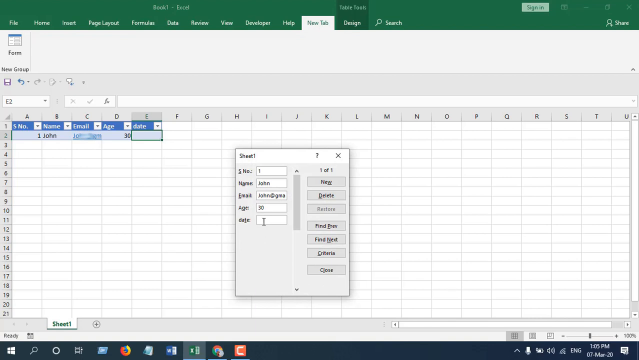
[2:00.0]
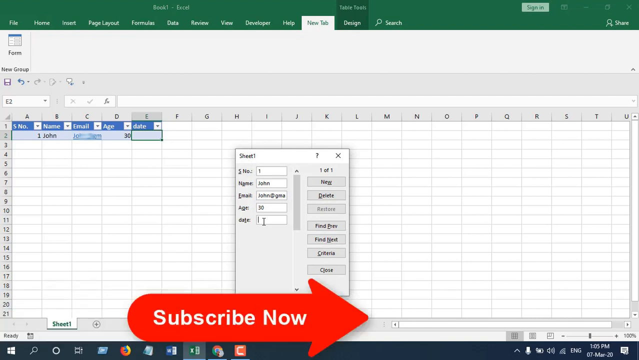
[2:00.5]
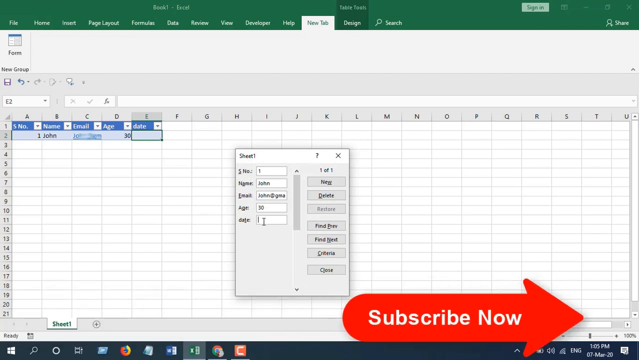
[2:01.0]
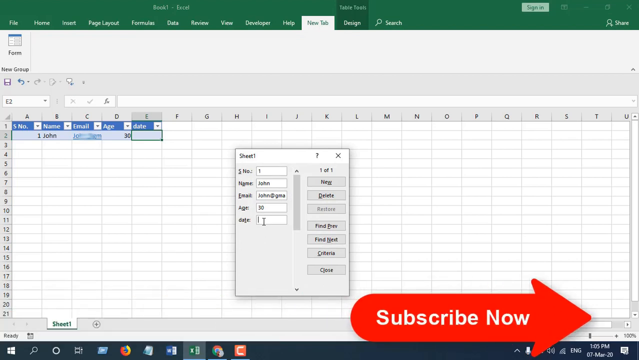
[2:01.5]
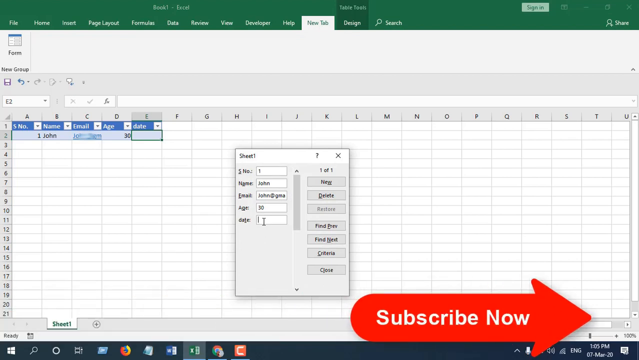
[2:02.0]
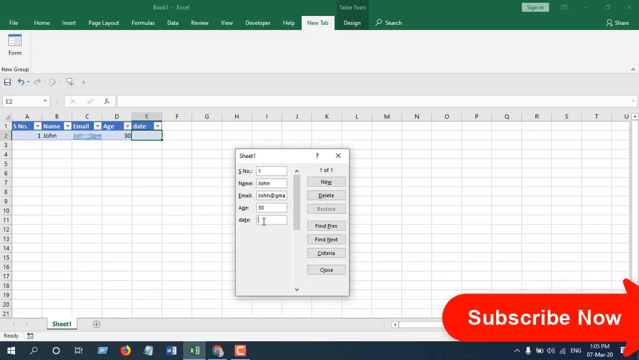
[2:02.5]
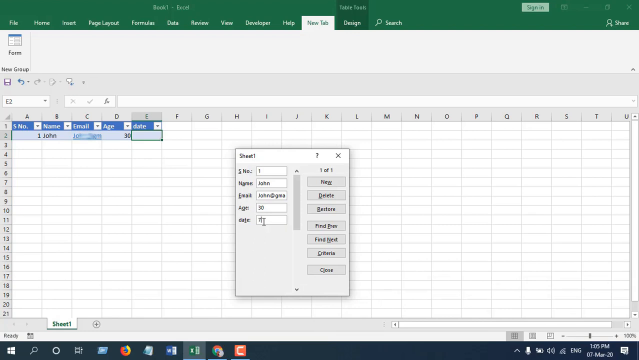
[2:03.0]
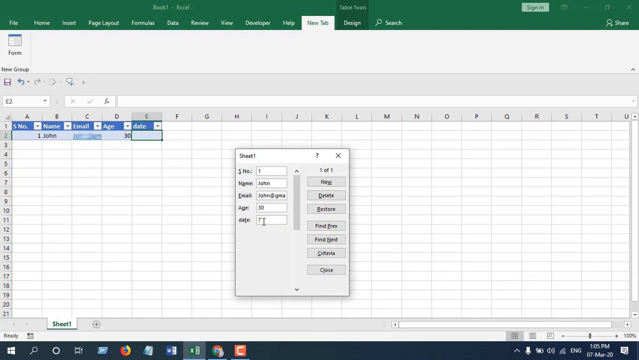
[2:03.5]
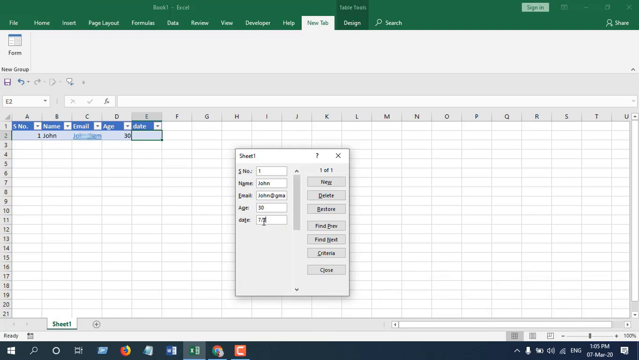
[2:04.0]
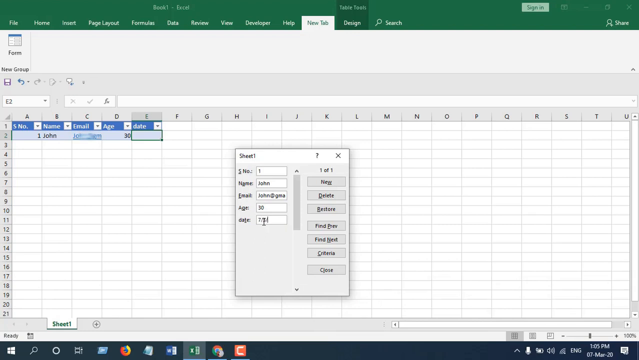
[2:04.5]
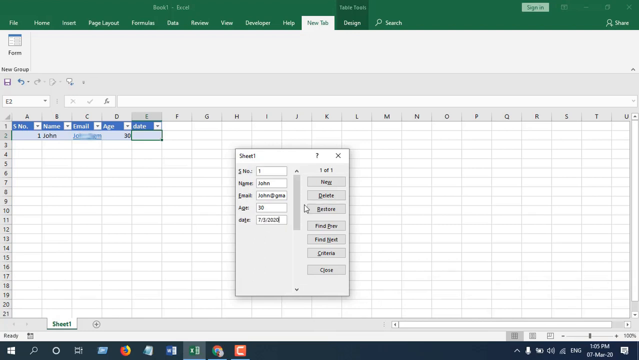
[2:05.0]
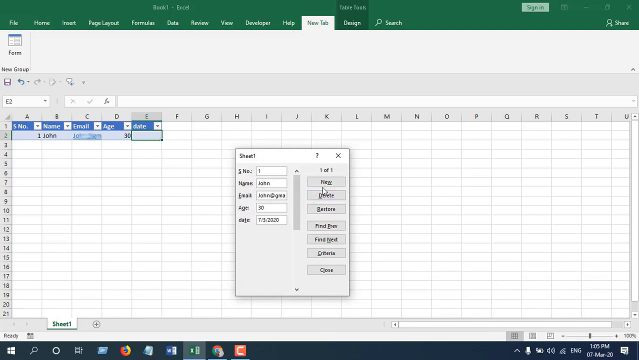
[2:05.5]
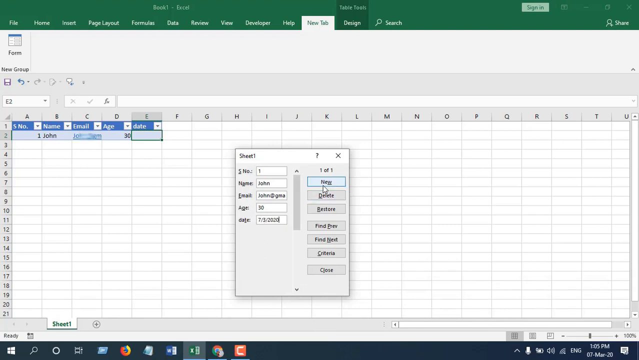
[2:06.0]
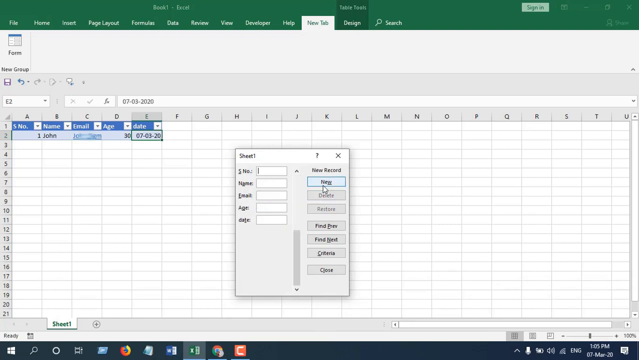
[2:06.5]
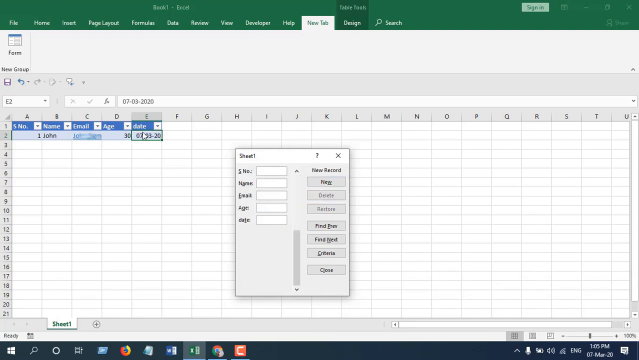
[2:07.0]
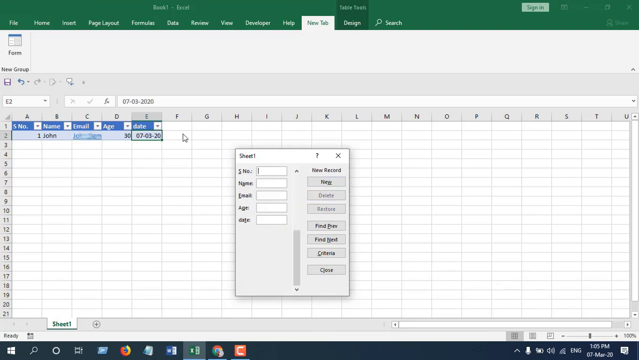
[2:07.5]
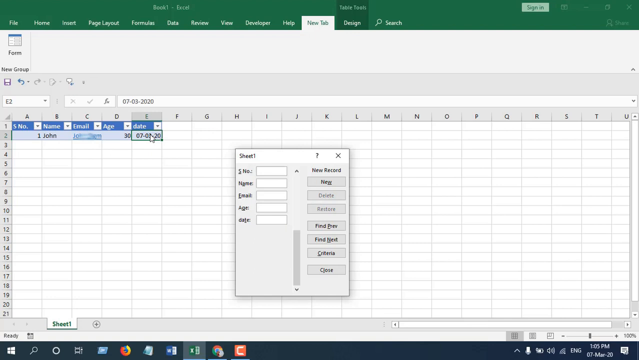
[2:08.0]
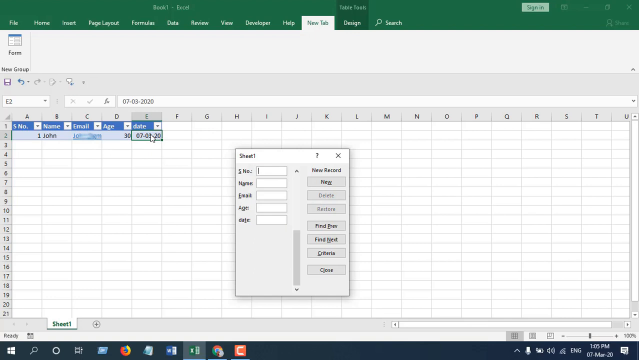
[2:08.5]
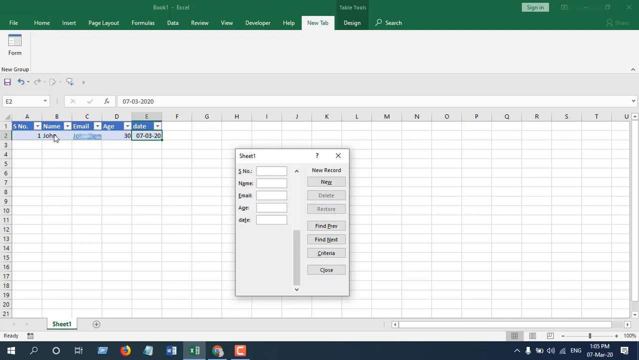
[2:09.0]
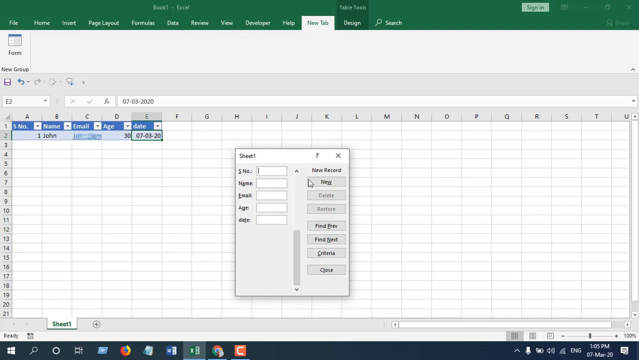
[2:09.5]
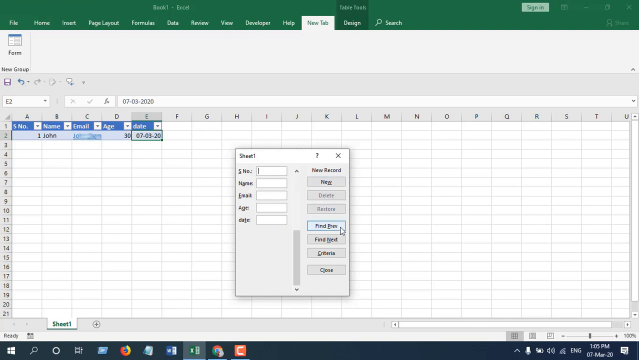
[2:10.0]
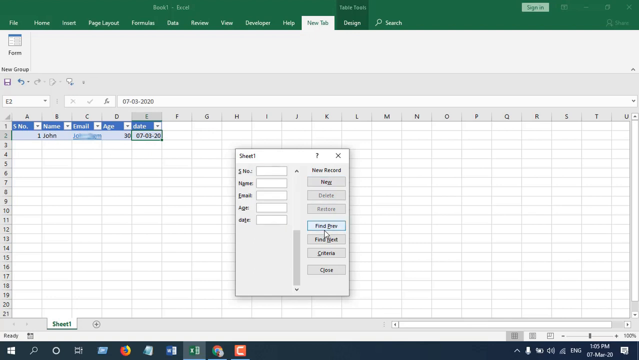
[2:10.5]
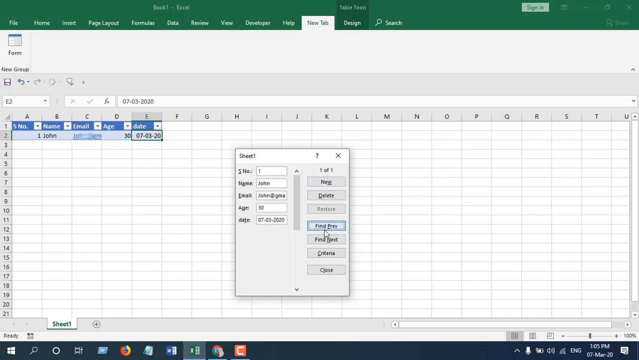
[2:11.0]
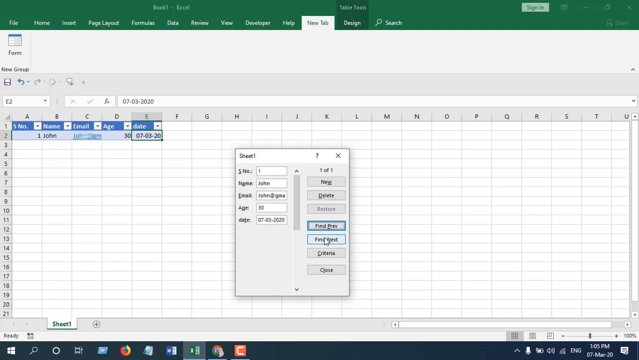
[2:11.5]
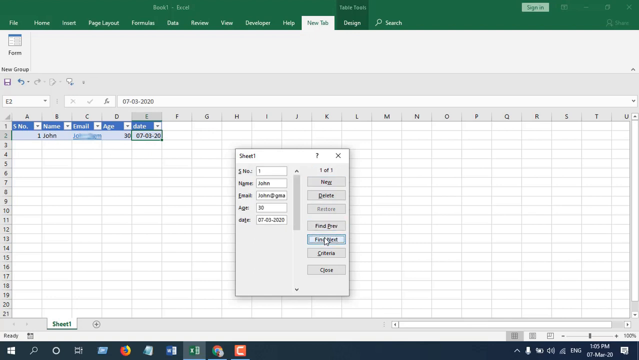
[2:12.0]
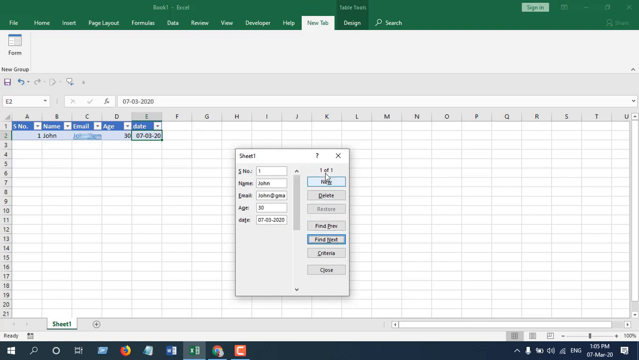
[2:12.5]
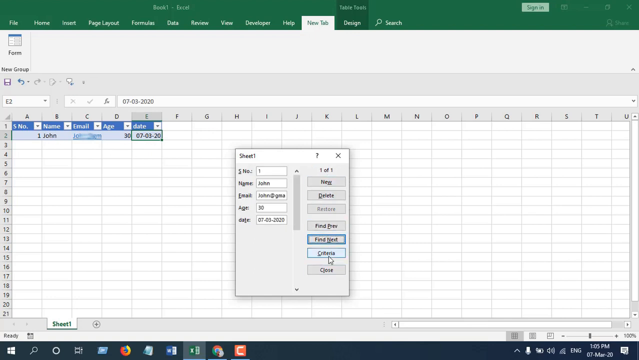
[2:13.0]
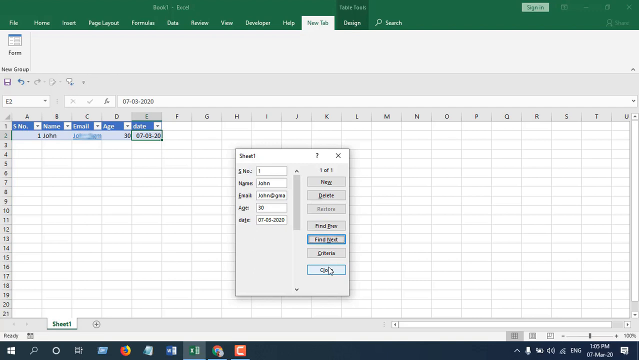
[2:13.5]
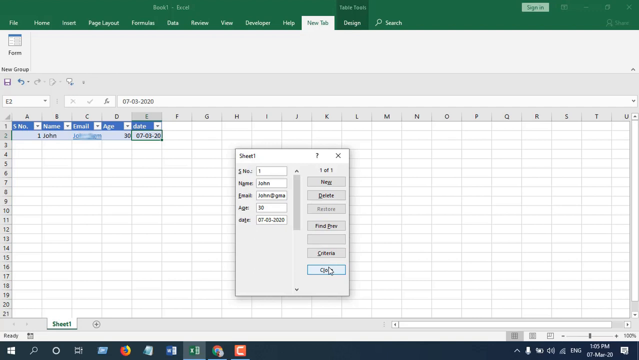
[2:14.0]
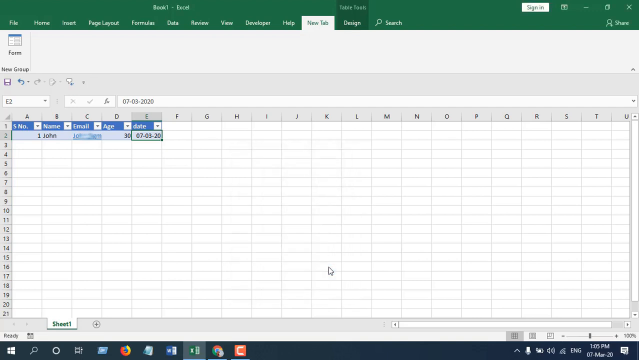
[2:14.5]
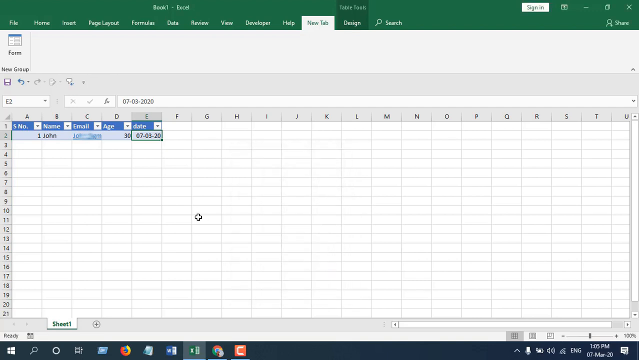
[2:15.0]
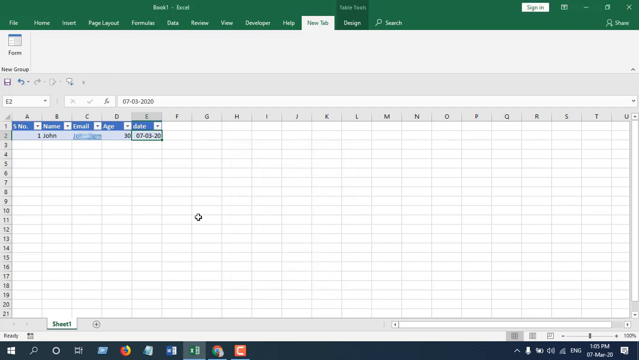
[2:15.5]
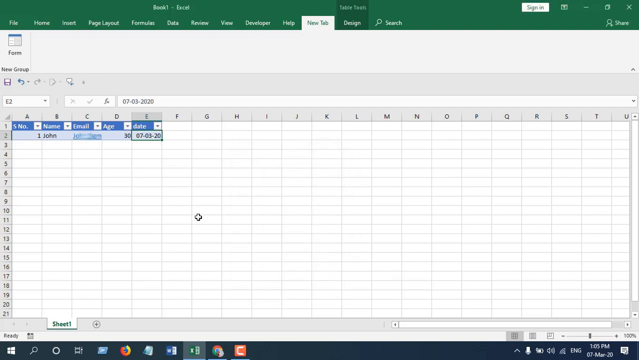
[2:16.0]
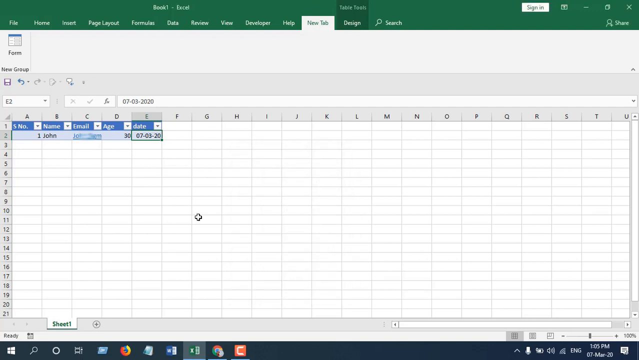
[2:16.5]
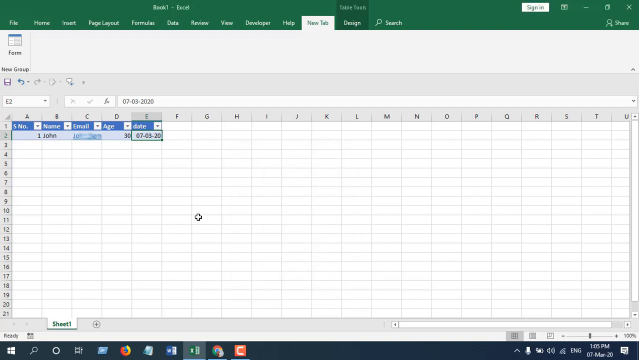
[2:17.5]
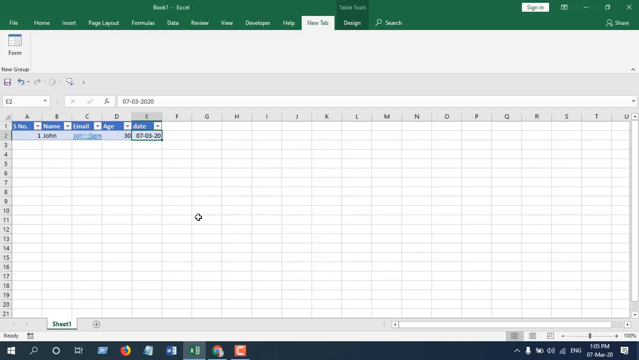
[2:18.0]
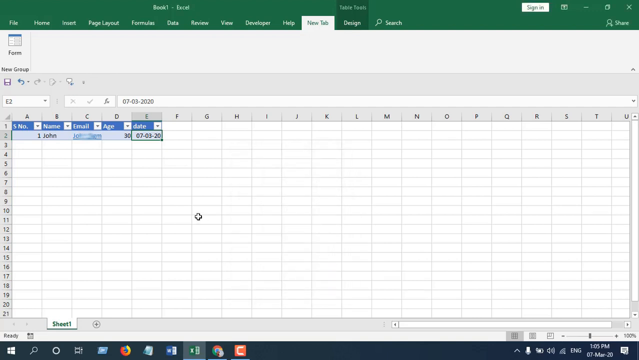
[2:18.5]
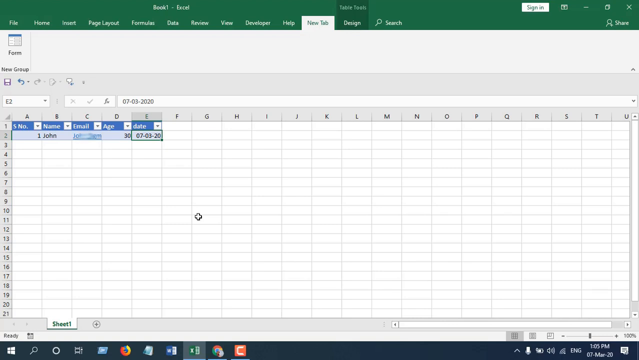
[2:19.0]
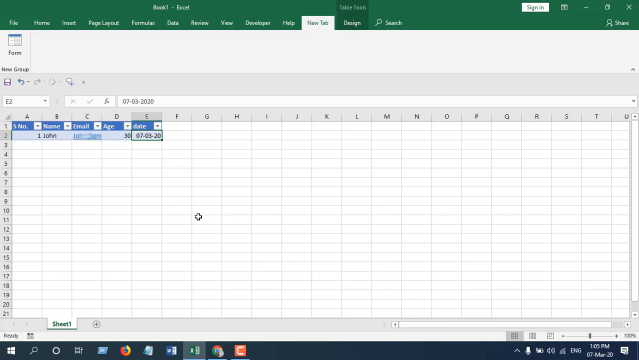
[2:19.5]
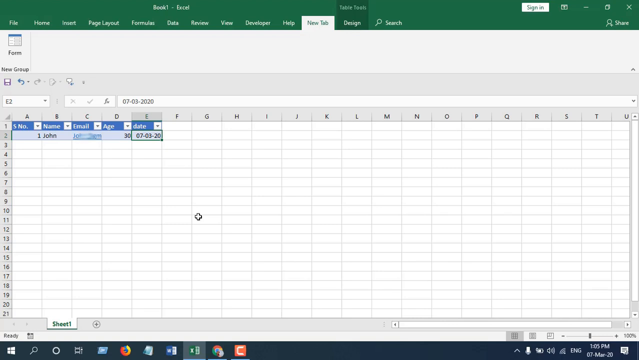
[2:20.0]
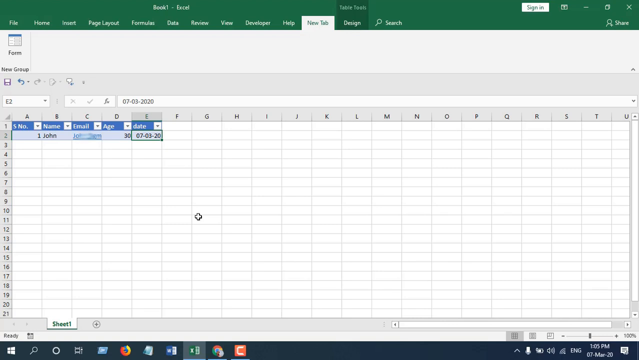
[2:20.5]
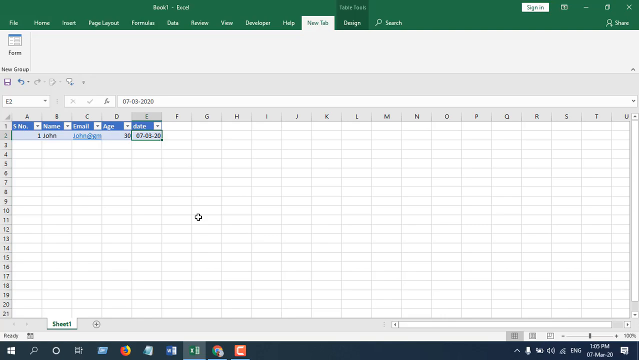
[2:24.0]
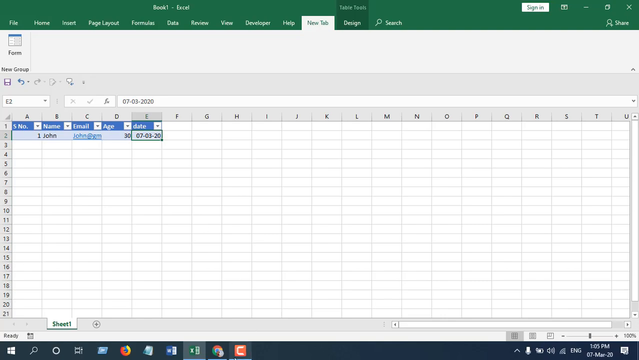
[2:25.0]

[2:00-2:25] A preview of everything in the actual tutorials is shown.